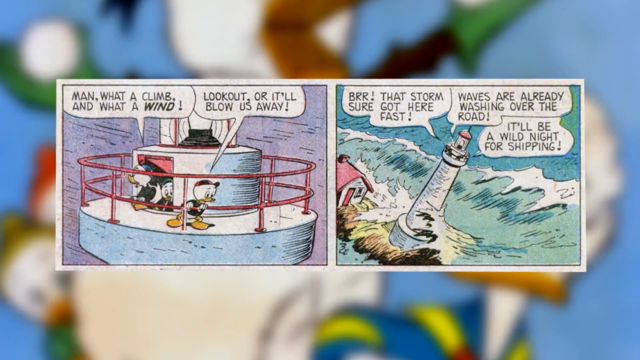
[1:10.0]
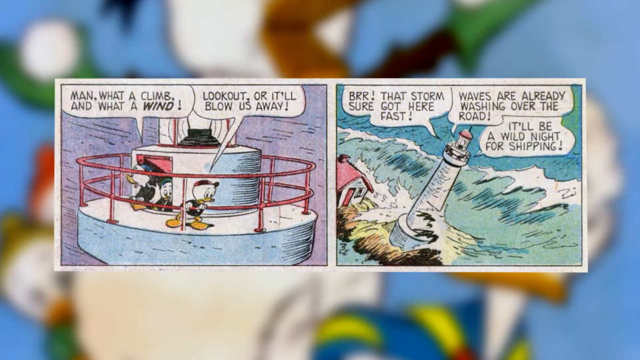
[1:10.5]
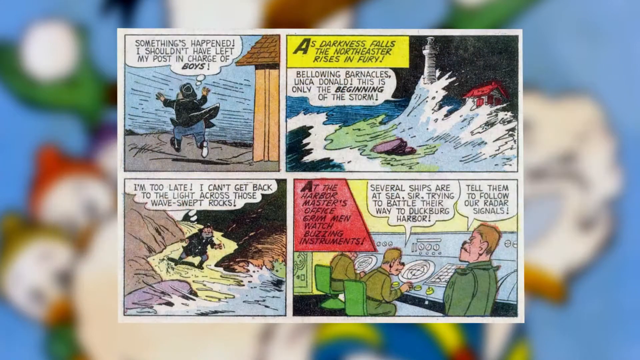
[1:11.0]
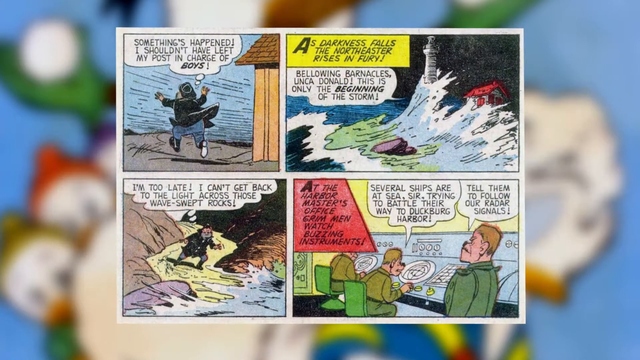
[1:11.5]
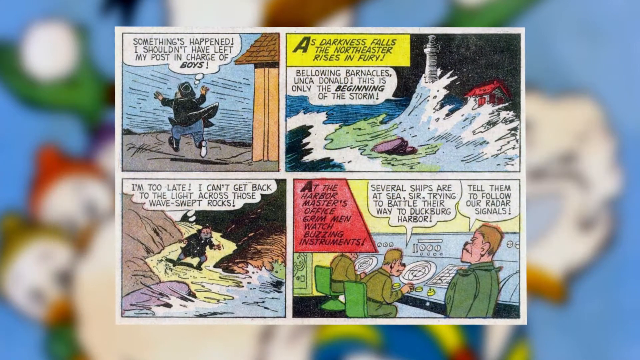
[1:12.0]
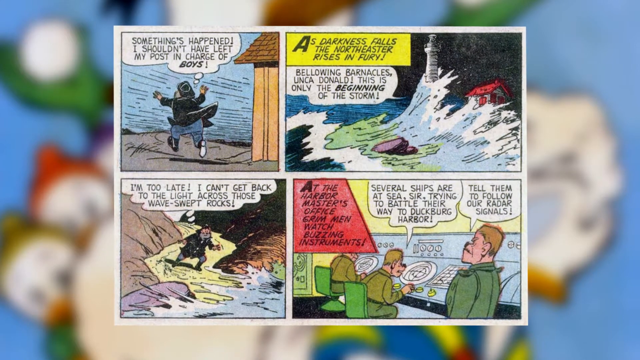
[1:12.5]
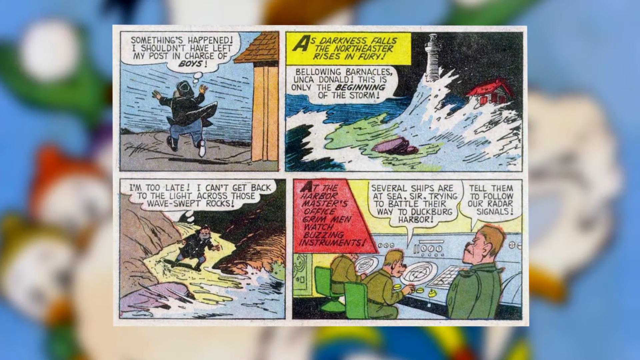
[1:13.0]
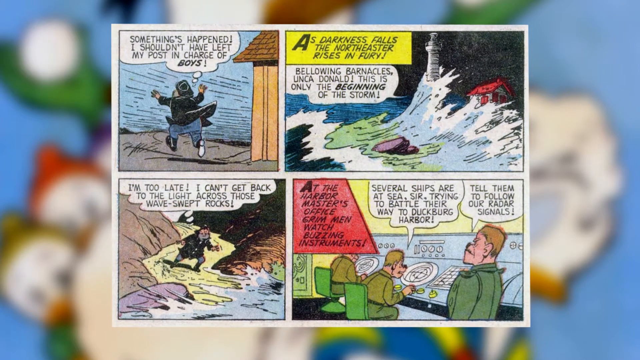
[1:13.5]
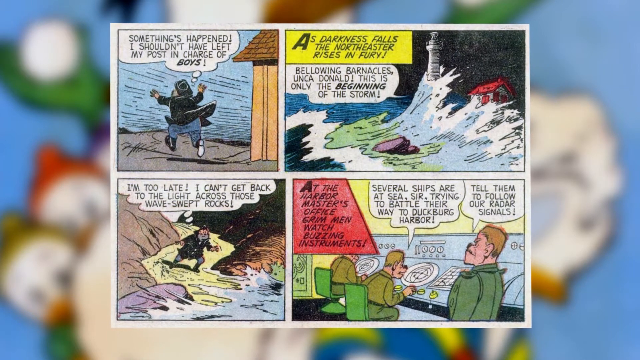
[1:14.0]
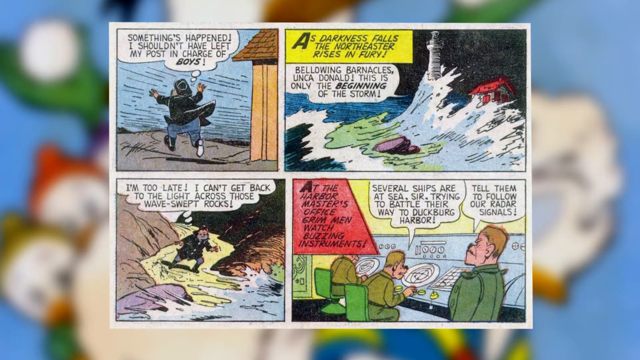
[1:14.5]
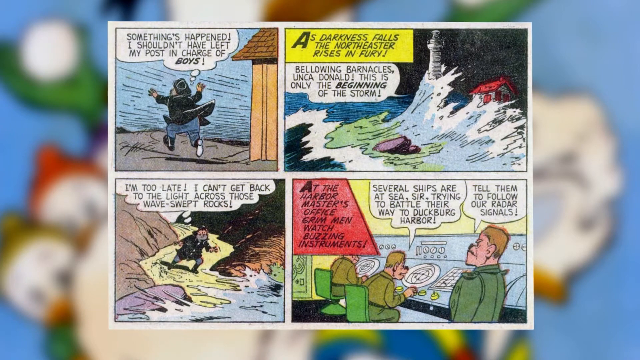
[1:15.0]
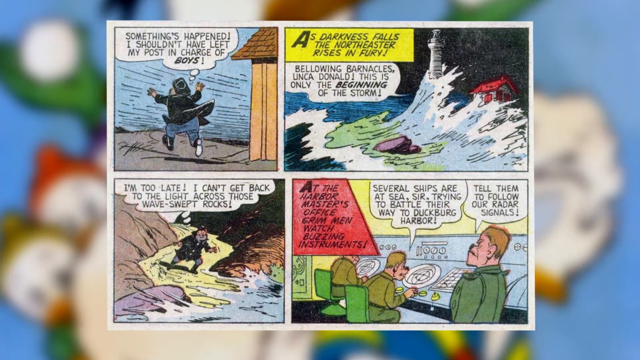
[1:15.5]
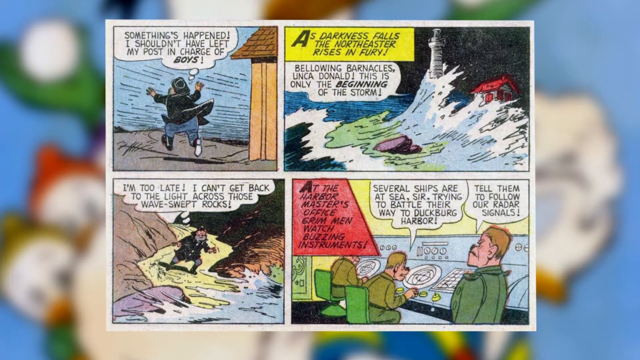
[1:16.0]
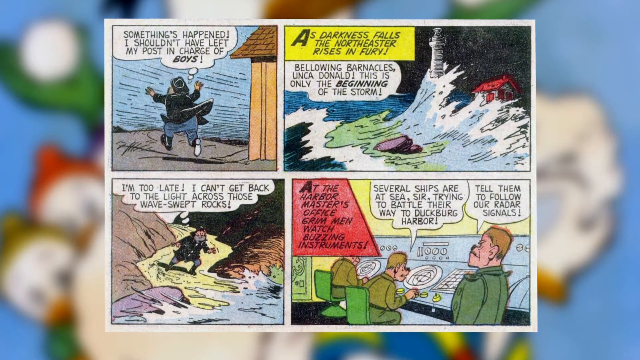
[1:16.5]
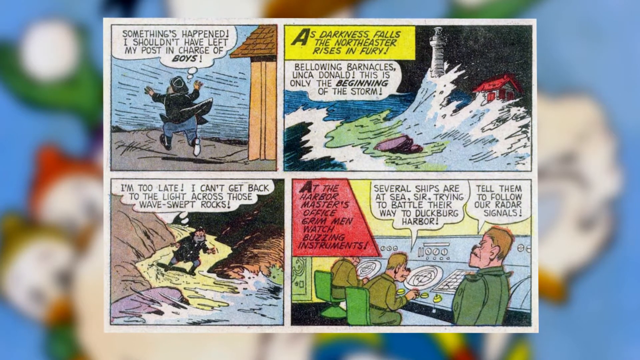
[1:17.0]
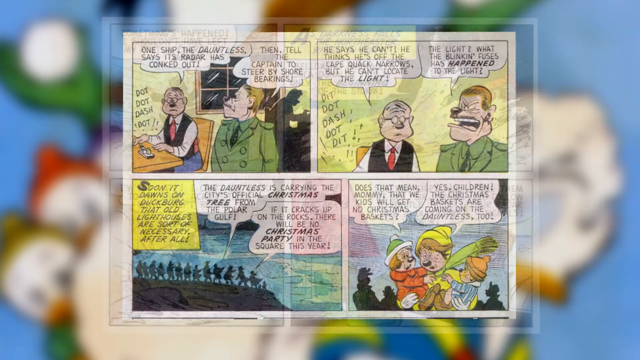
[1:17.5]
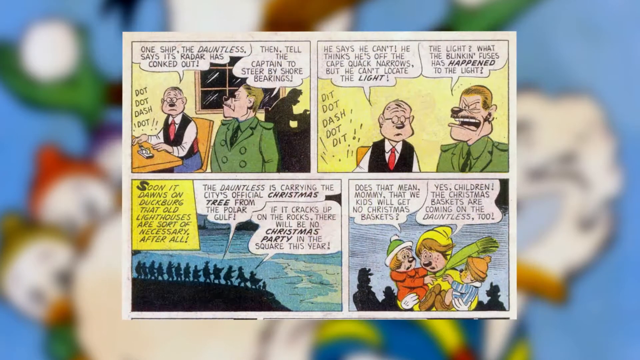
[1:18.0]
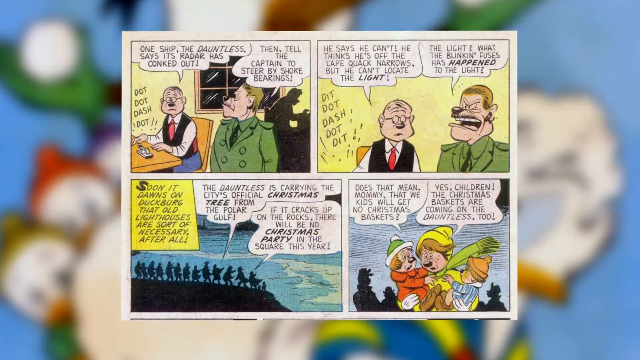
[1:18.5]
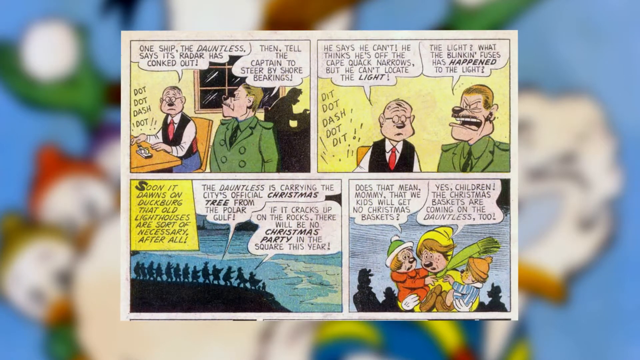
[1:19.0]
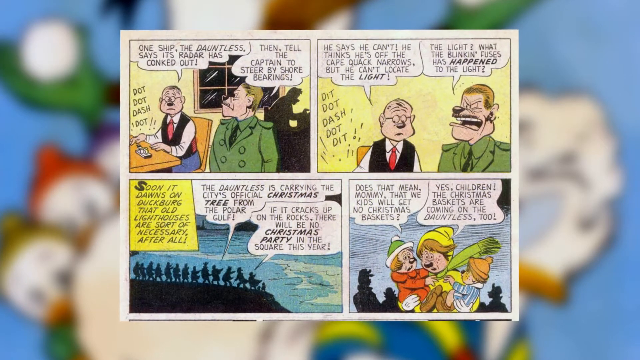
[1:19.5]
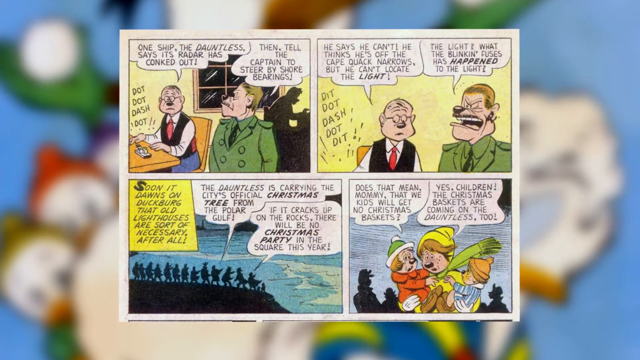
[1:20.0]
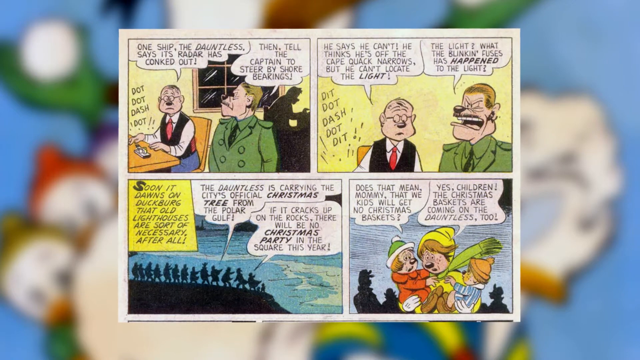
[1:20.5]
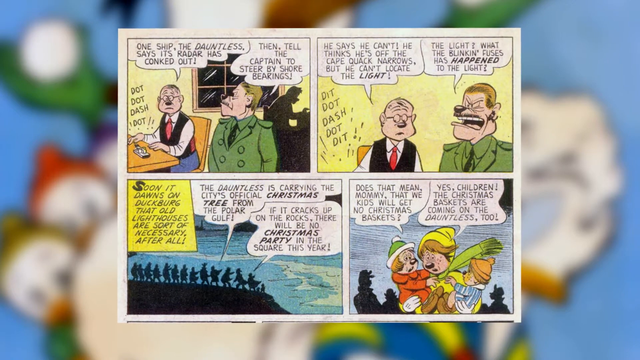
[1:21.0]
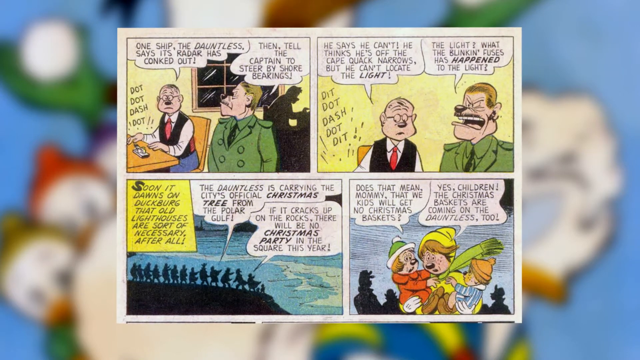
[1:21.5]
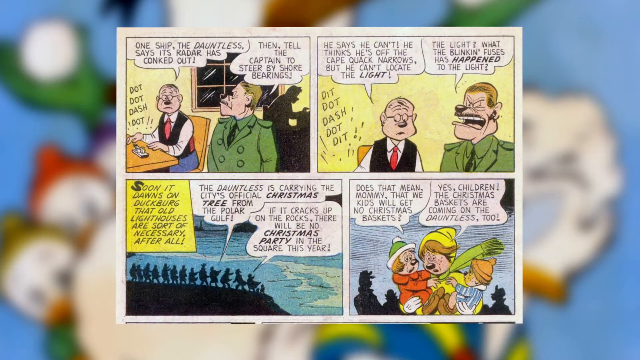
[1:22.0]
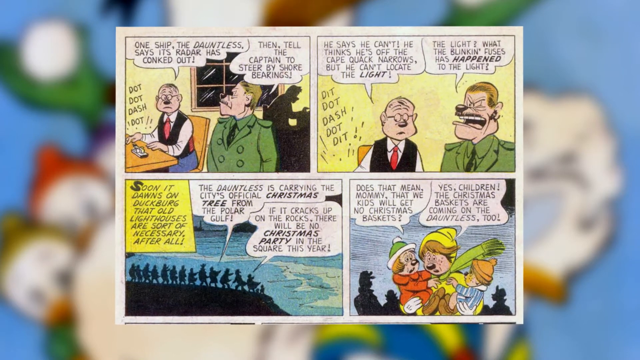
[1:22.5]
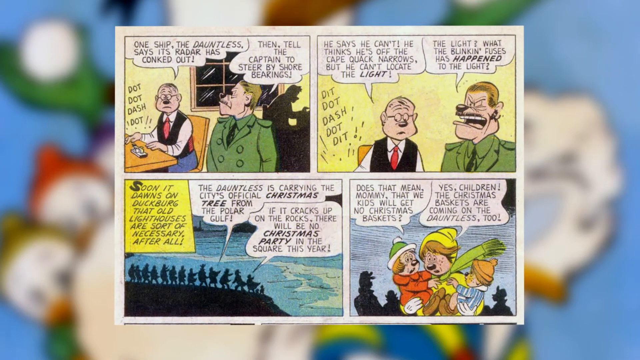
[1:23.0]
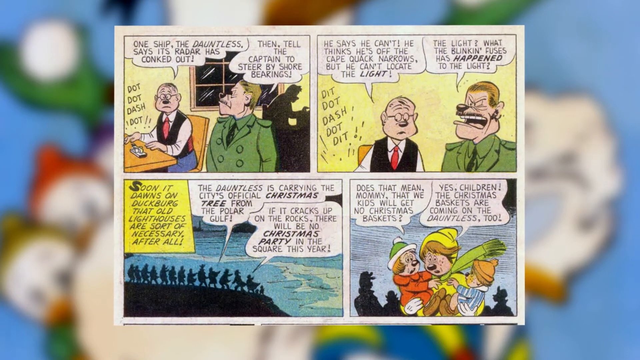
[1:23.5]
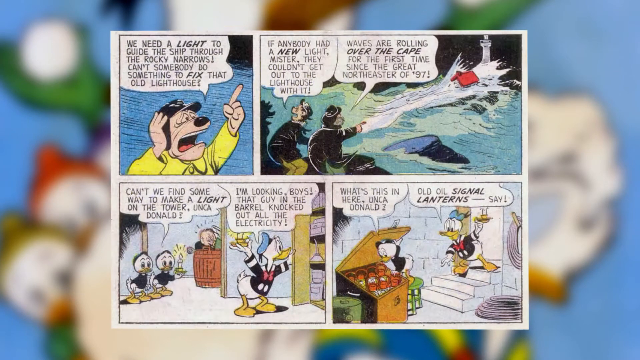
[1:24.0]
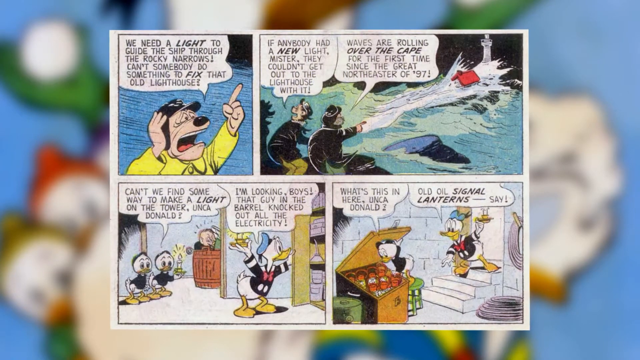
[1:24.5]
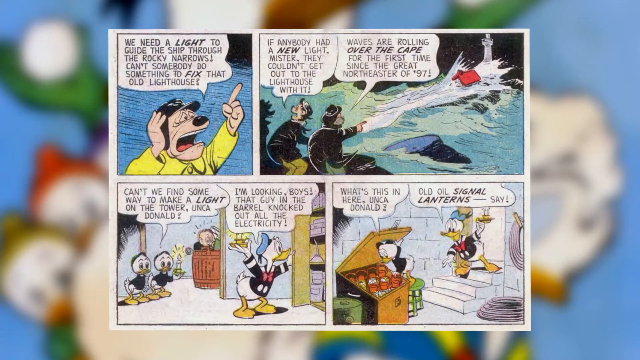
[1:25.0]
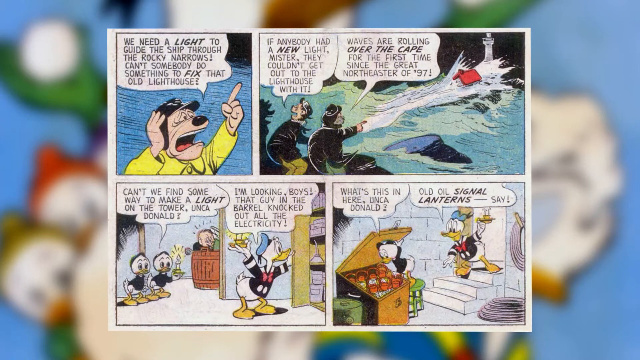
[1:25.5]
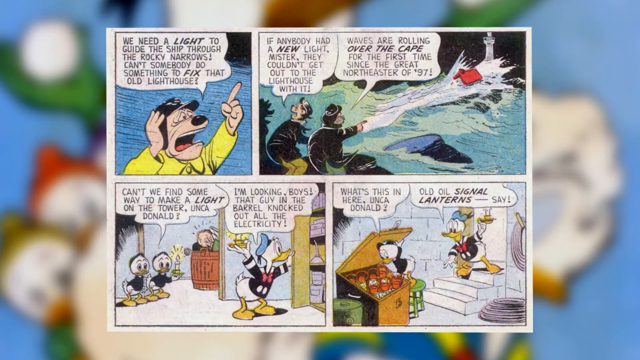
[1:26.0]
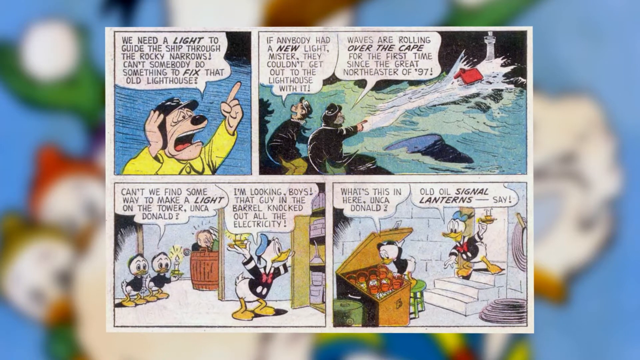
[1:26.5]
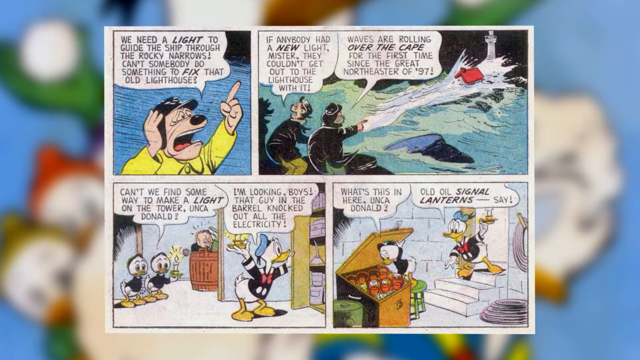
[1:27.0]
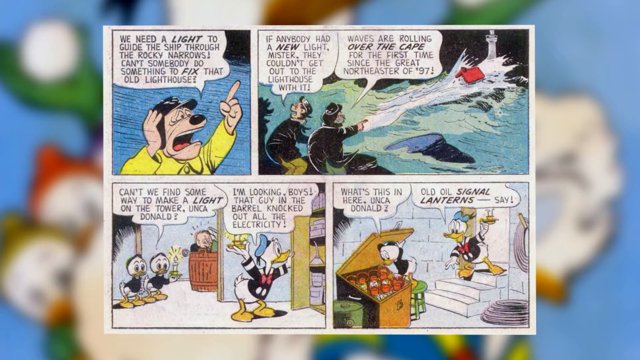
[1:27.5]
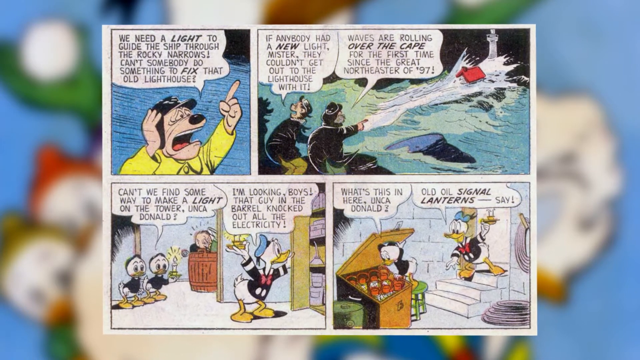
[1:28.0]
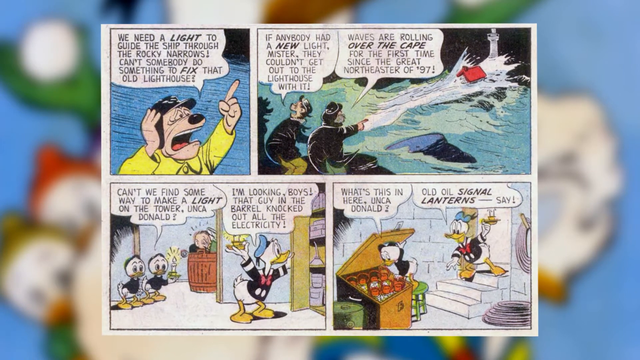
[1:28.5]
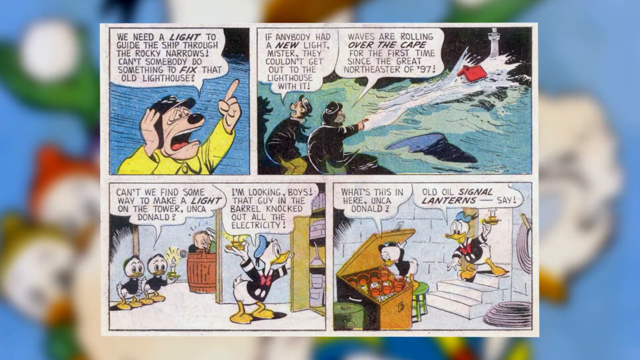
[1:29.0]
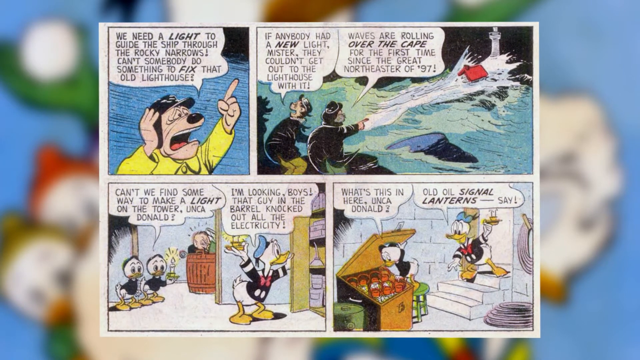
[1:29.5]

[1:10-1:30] The three small ducks are on top of the lighthouse as very large storms and waves wash ashore. The lighthouse keeper panics and tries to run back to the lighthouse, but he cannot because too many waves are crashing in. Next comes something kind of like a command center, where people seem to be discussing a ship that may be lost and seem to be relying on the old lighthouse to guide the way, though the lighthouse apparently has a problem: the light has gone out. Inside the lighthouse, Daffy Duck and the three little ducks frantically look for some type of oil to light lanterns so they can keep fulfilling the lighthouse keeper's duty while he is away and unable to reach the lighthouse because of the storm.